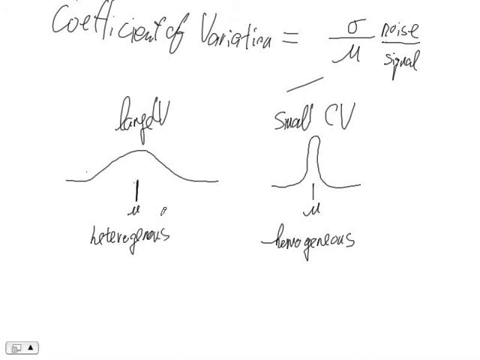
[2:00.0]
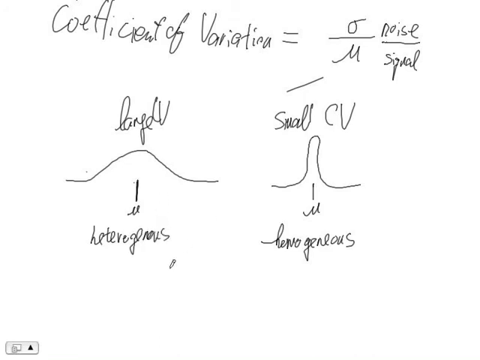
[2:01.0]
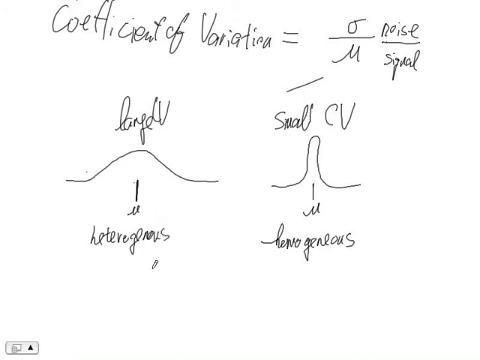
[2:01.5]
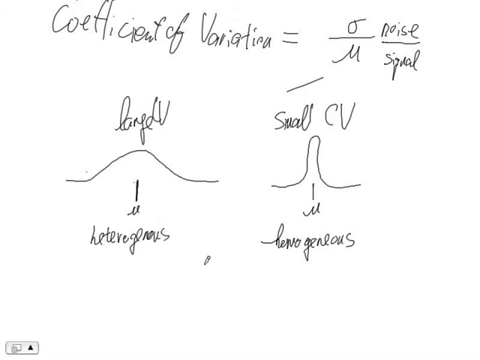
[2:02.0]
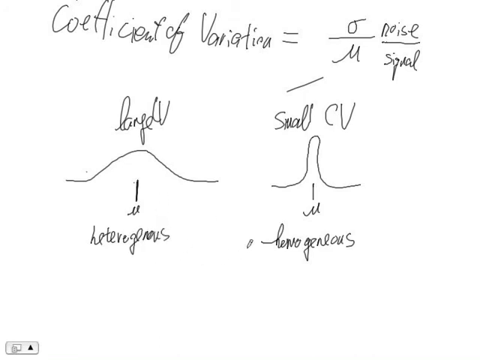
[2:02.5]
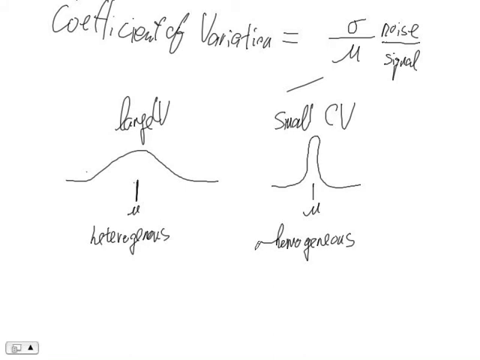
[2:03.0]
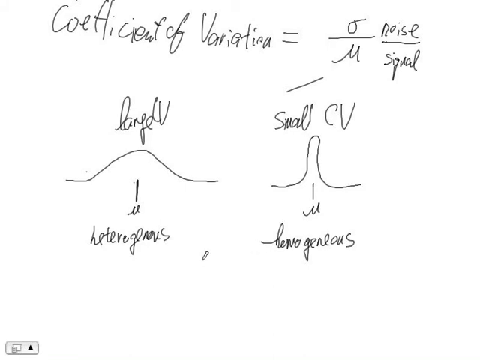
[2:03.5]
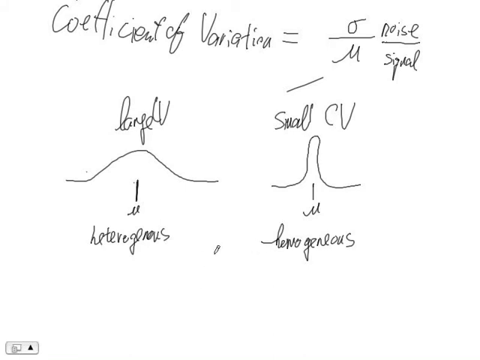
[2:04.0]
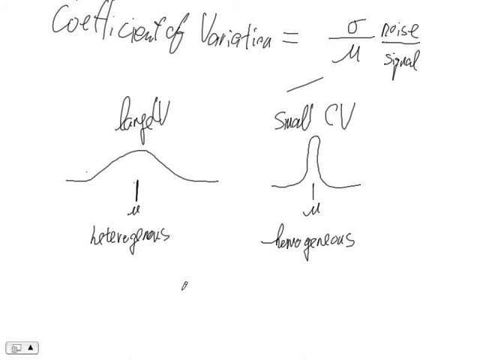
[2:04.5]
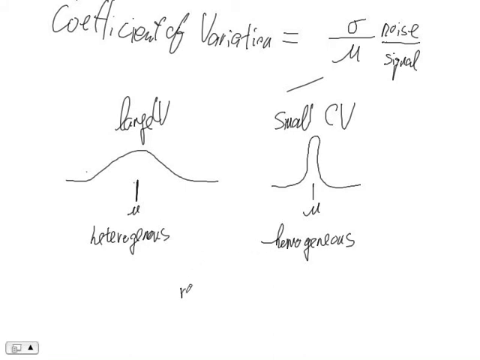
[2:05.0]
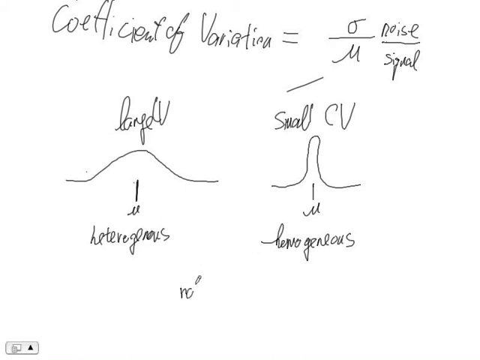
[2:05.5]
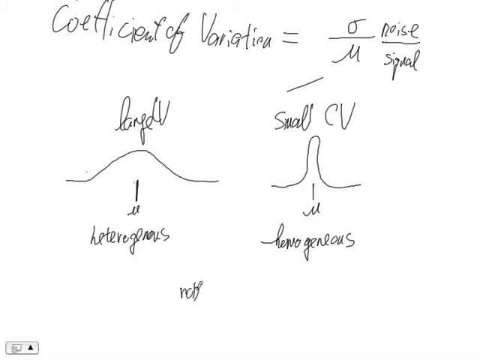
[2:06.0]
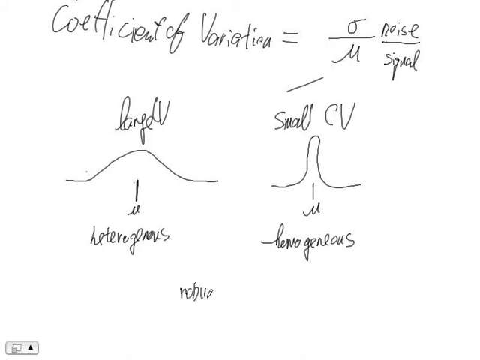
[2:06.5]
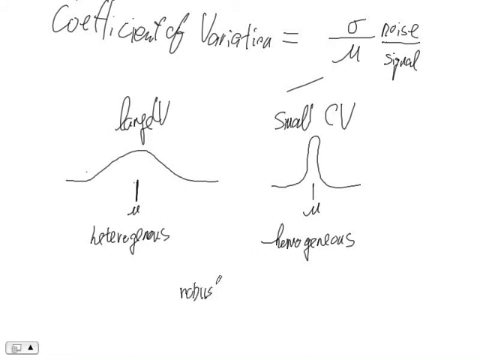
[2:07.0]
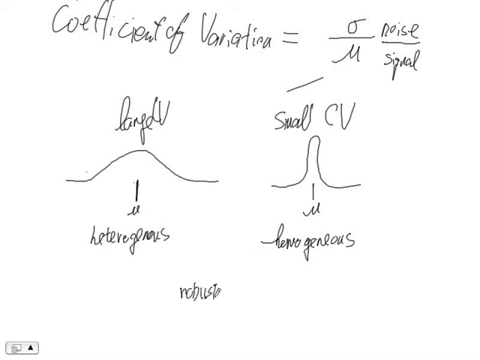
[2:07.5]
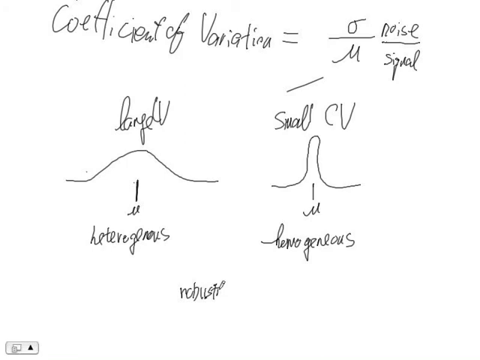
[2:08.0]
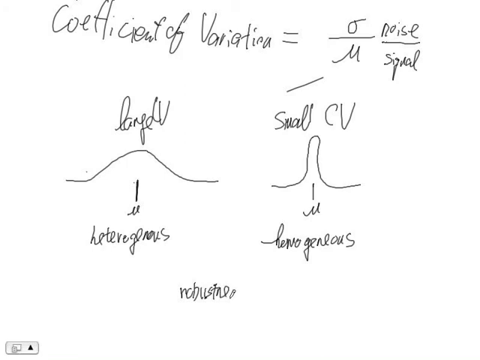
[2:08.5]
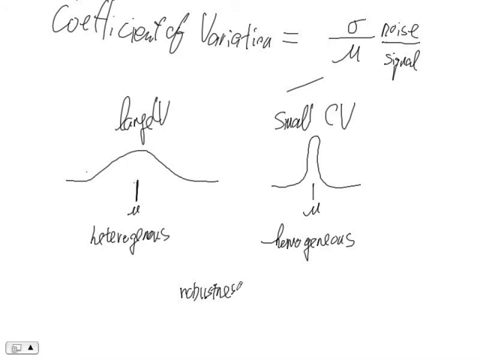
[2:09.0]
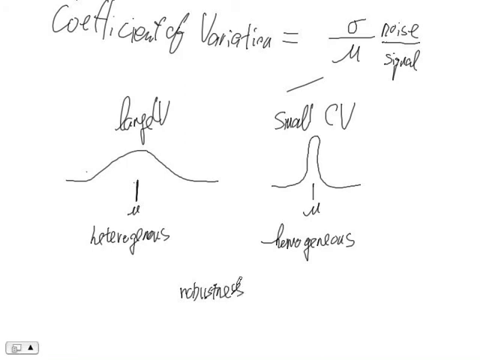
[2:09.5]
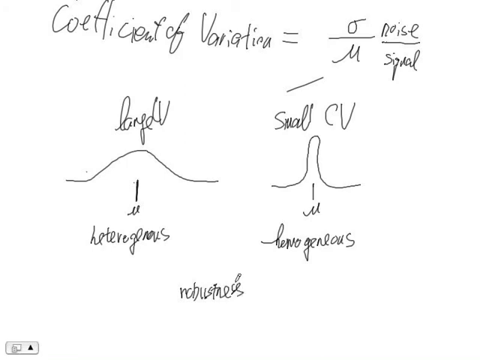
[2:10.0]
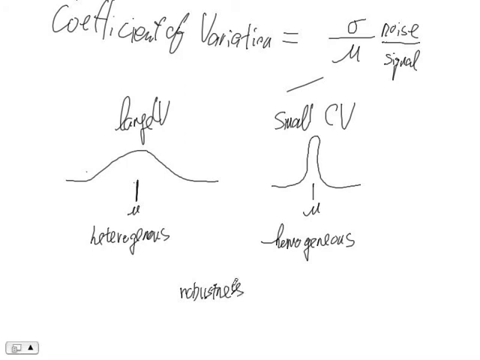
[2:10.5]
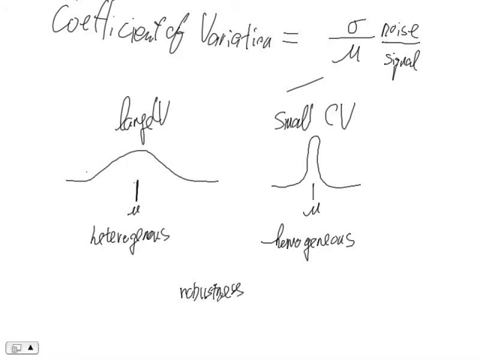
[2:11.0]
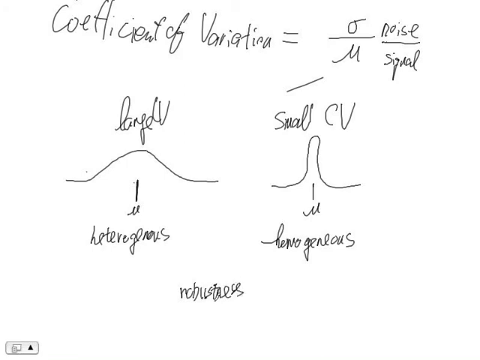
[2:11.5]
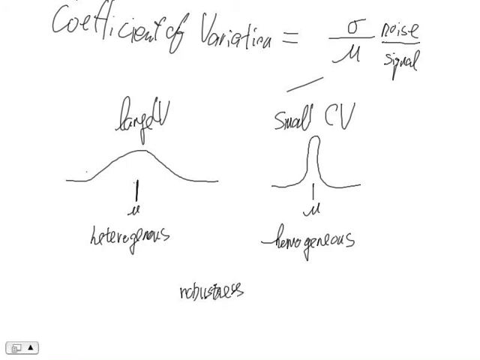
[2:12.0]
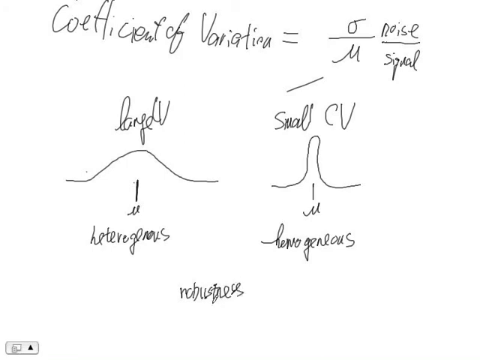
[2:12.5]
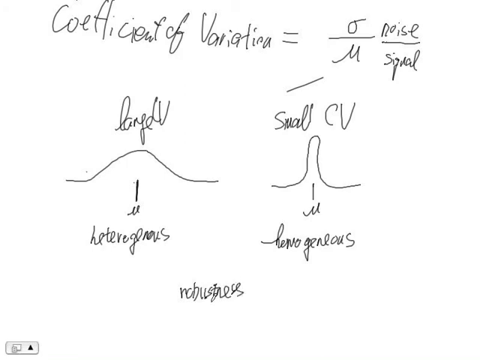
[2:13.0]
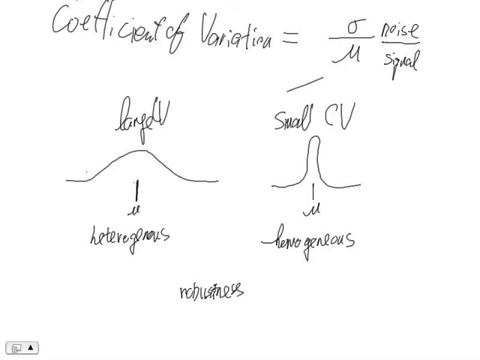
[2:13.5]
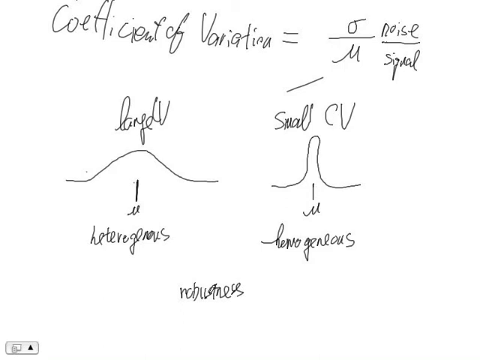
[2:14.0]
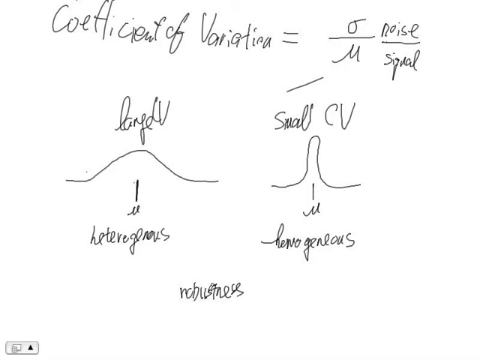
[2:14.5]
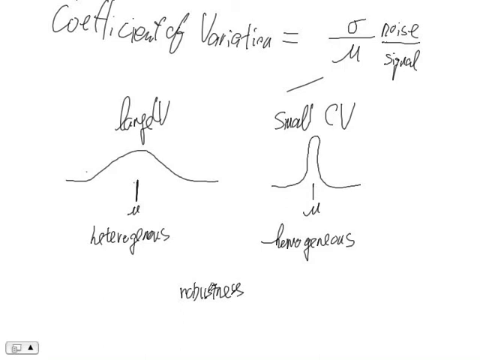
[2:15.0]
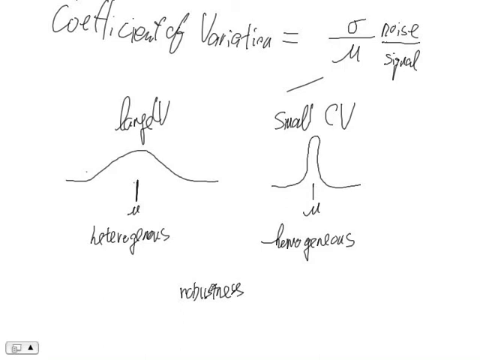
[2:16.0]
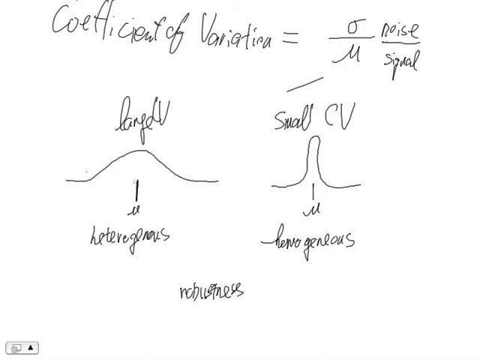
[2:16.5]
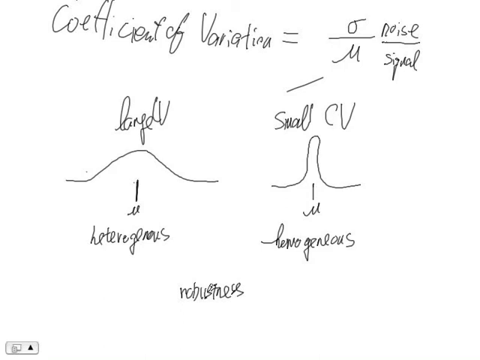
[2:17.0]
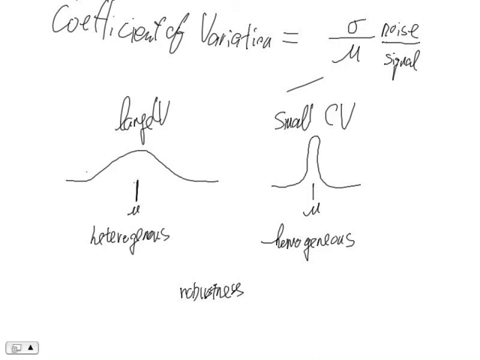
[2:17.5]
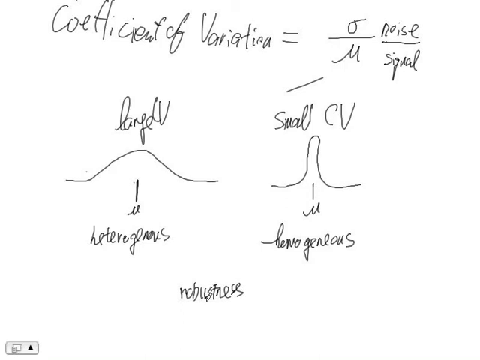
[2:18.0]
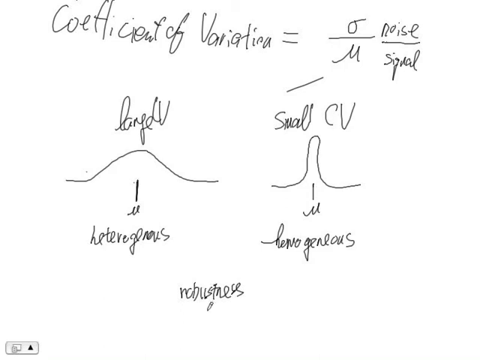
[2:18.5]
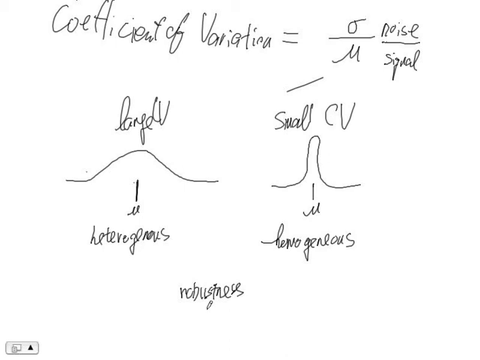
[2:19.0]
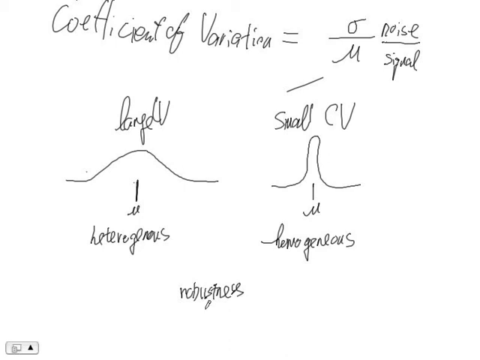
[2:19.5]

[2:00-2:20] The pencil indicates both drawings in relation to the noise divided by the signal. With the large V, the noise is not that great, while with the small CV a greater length of noise and signal is shown on the diagram. An equation that seems complex is shown. A person controls the writing on the white page on the laptop, demonstrating the coefficient of variation.